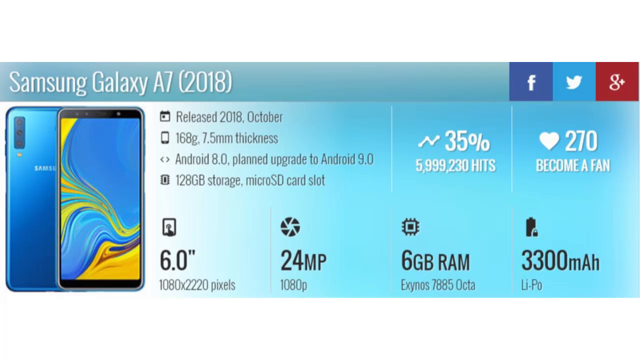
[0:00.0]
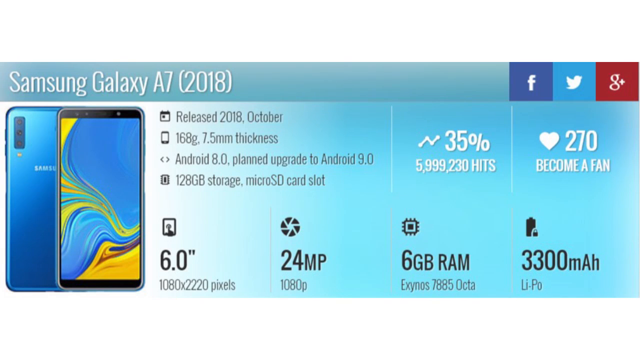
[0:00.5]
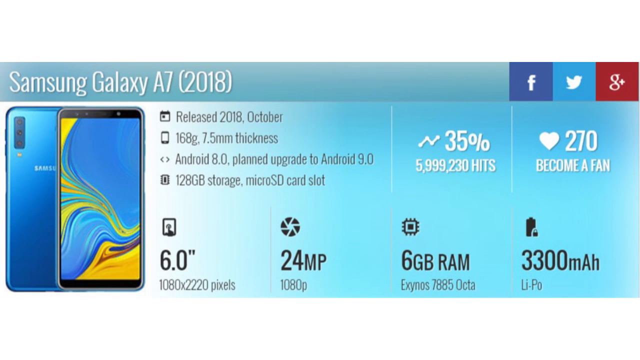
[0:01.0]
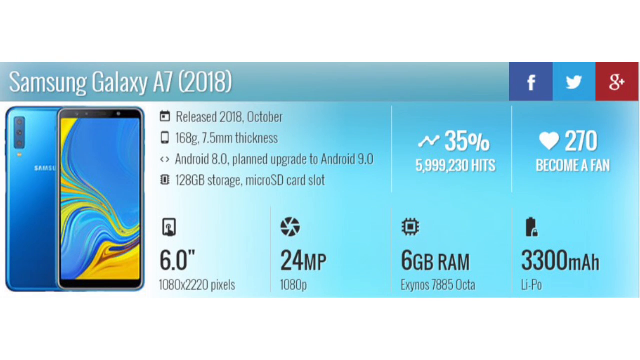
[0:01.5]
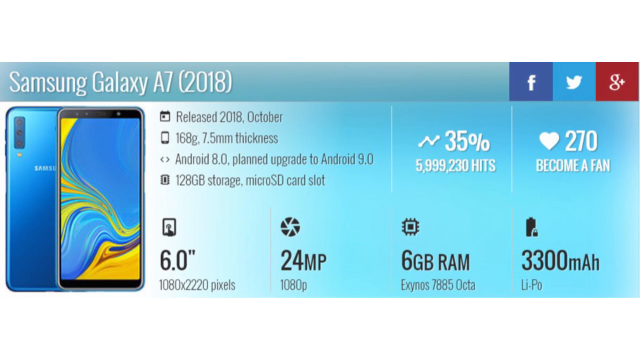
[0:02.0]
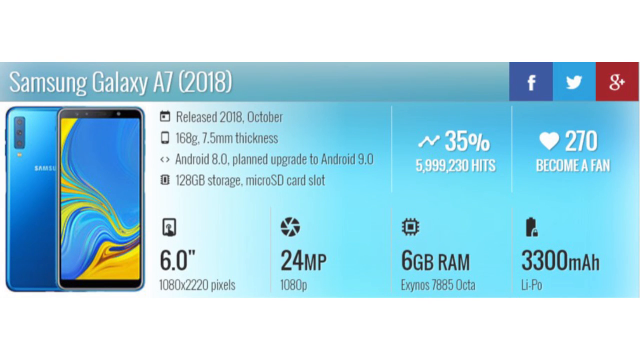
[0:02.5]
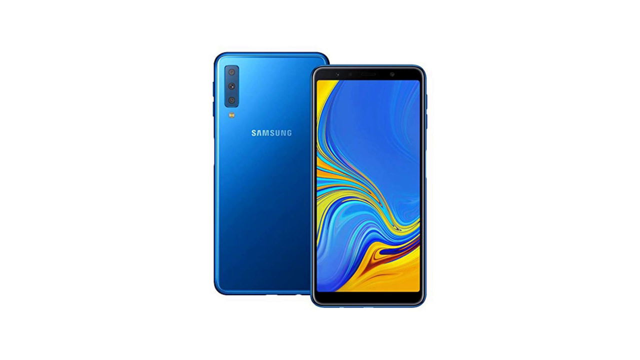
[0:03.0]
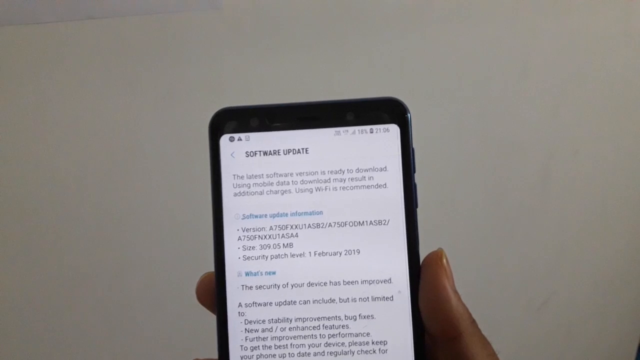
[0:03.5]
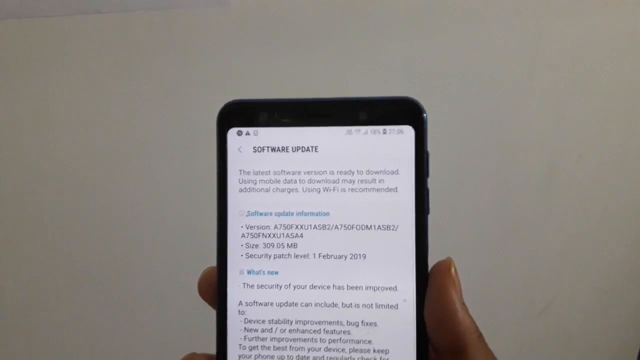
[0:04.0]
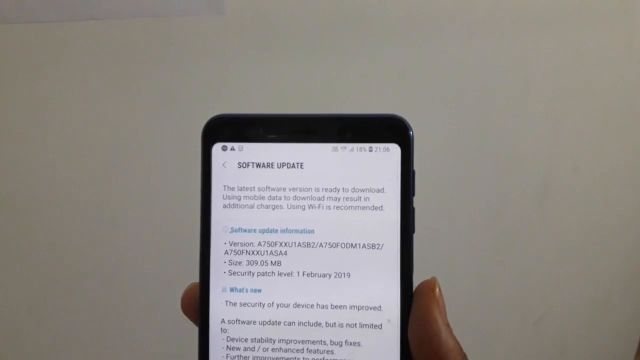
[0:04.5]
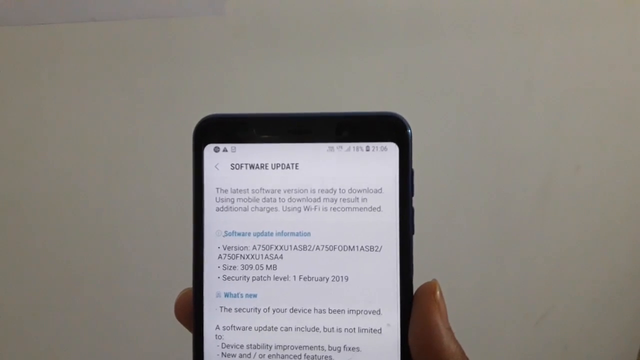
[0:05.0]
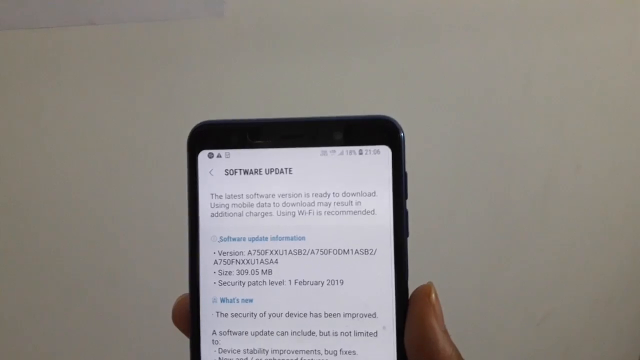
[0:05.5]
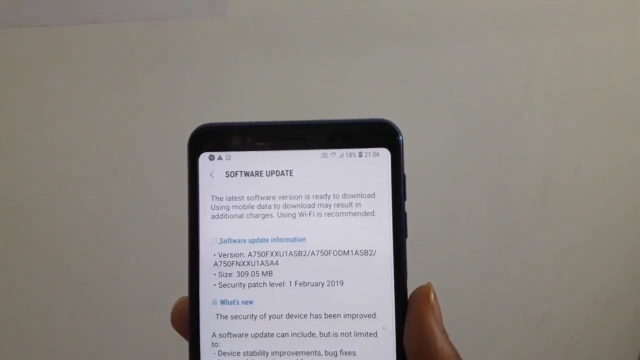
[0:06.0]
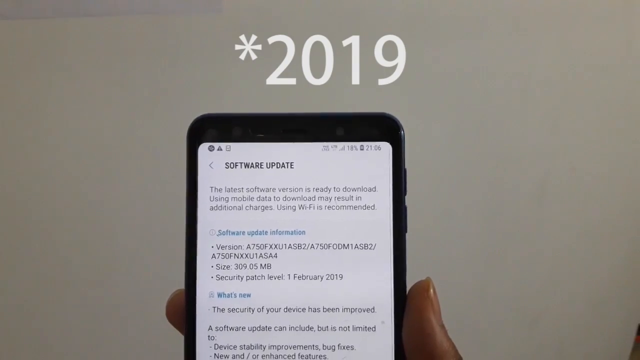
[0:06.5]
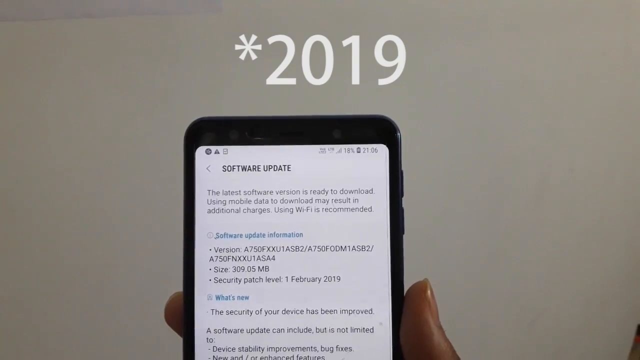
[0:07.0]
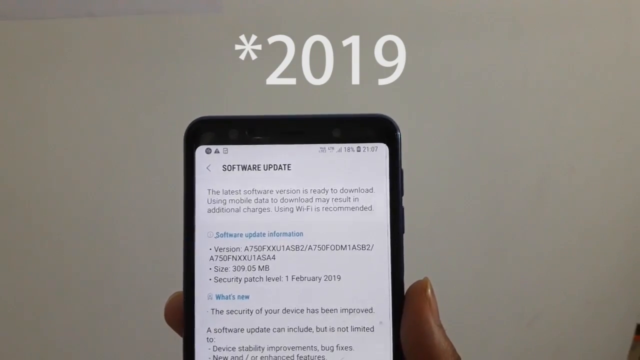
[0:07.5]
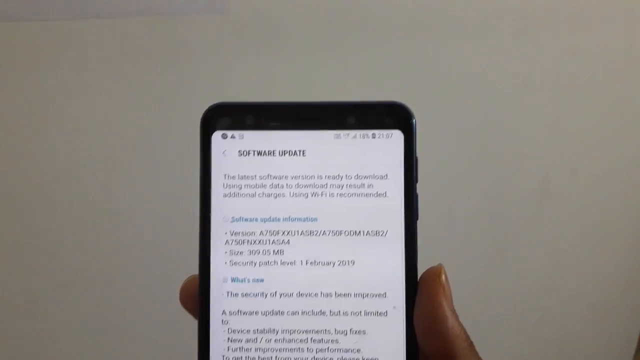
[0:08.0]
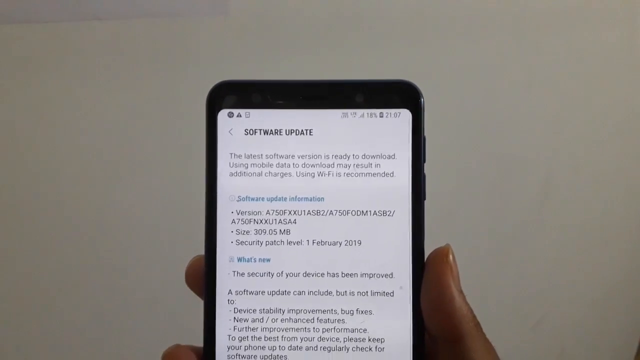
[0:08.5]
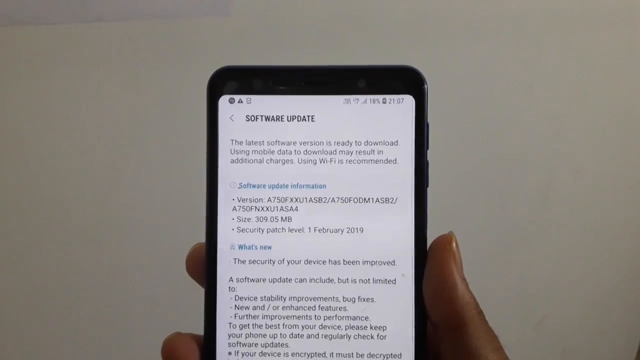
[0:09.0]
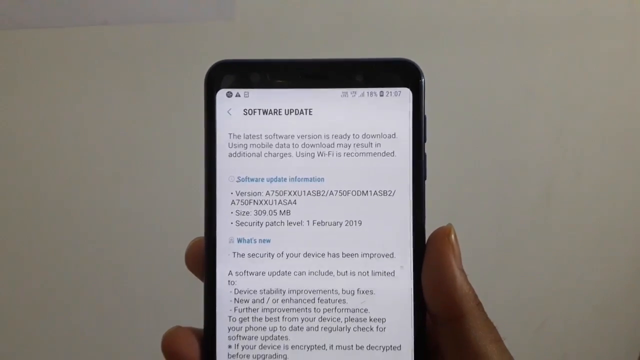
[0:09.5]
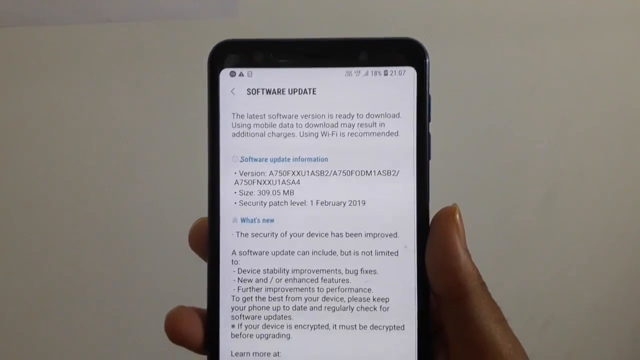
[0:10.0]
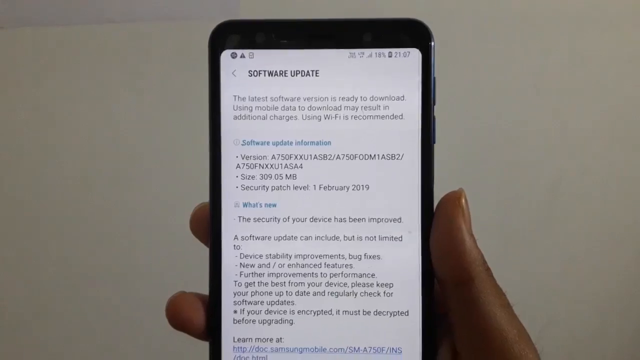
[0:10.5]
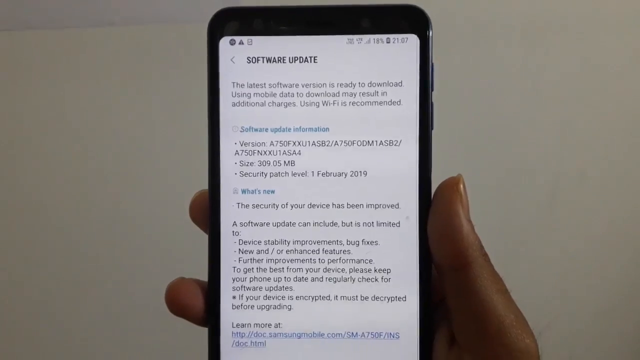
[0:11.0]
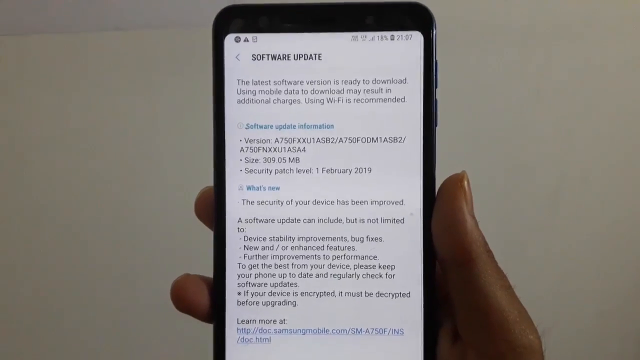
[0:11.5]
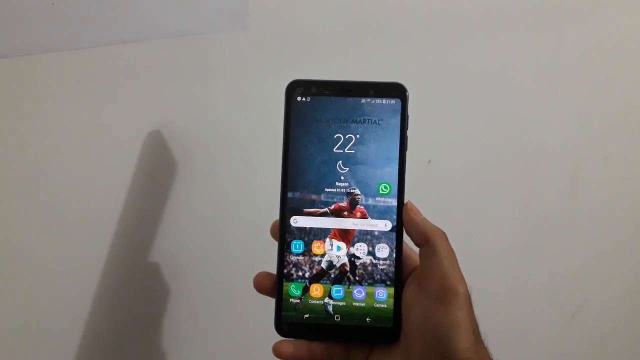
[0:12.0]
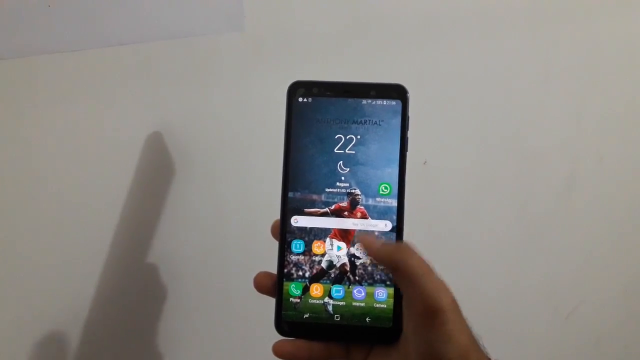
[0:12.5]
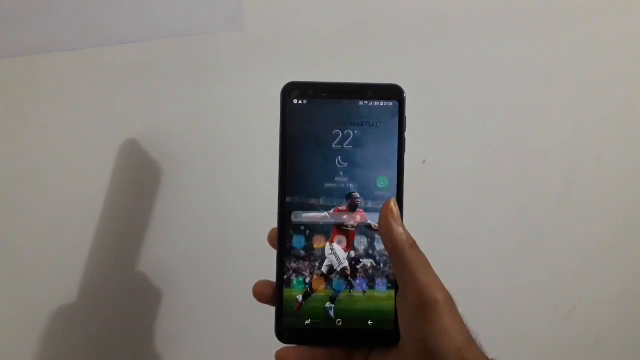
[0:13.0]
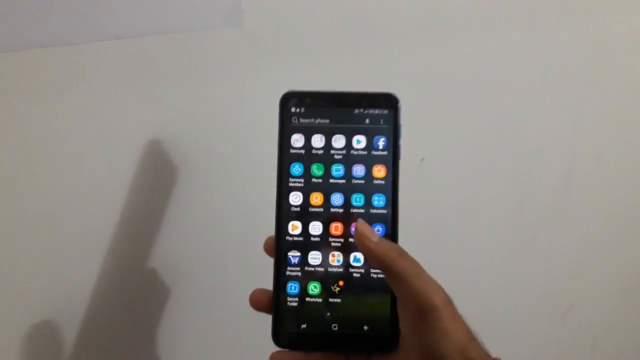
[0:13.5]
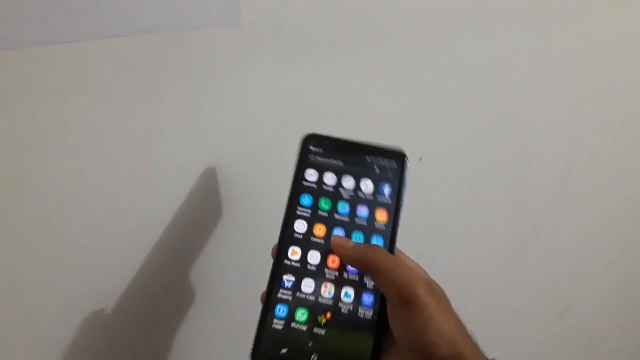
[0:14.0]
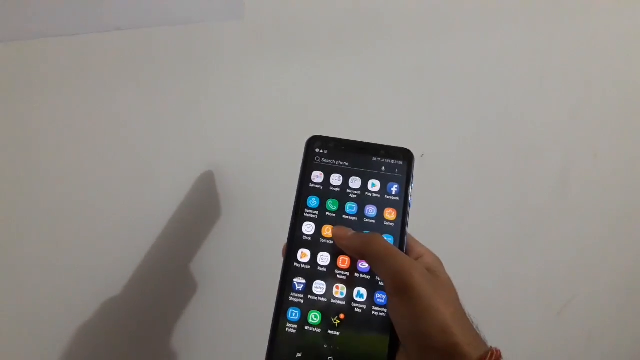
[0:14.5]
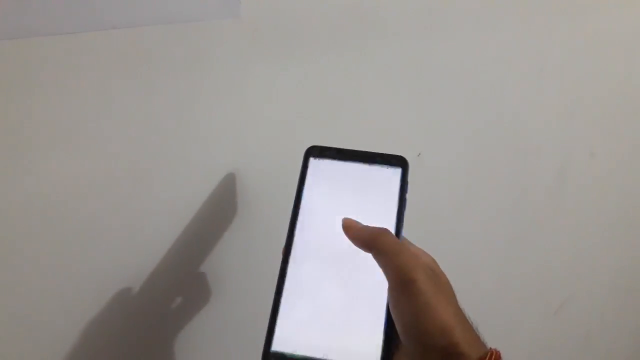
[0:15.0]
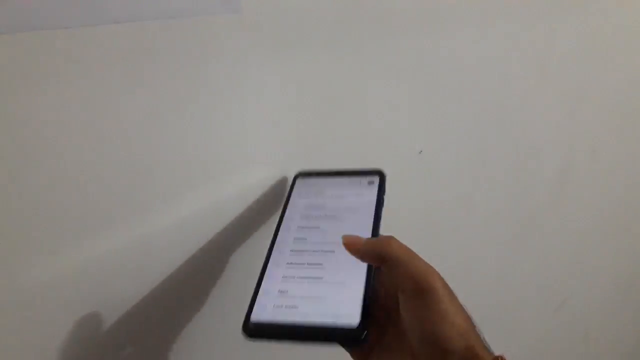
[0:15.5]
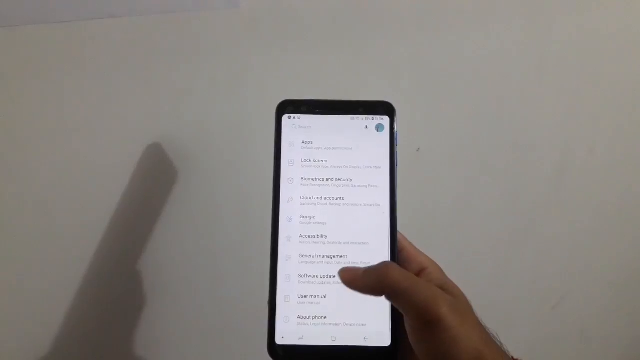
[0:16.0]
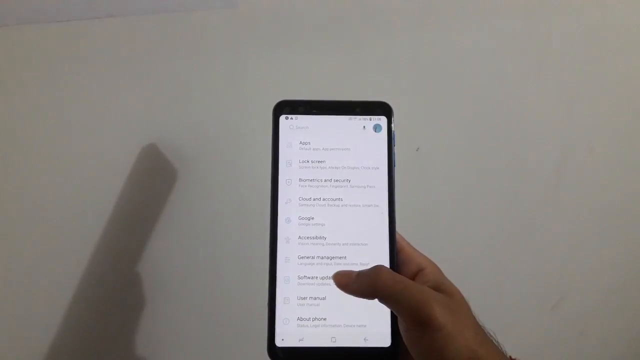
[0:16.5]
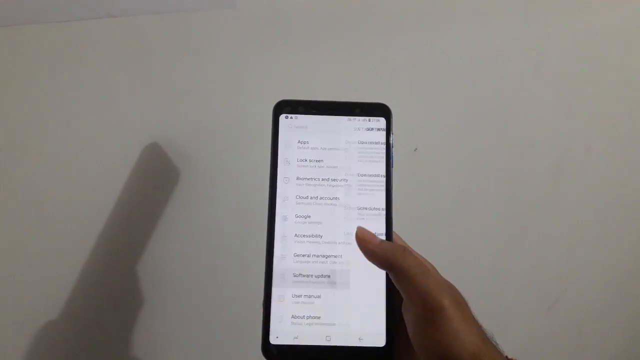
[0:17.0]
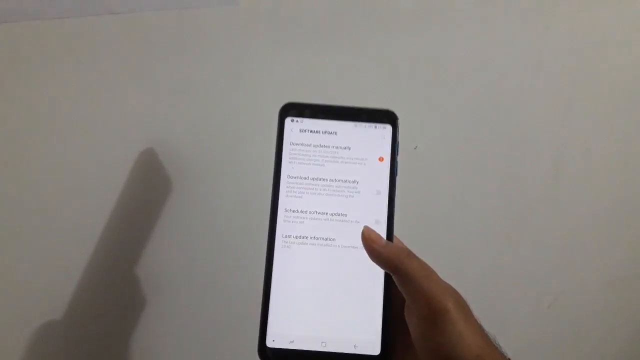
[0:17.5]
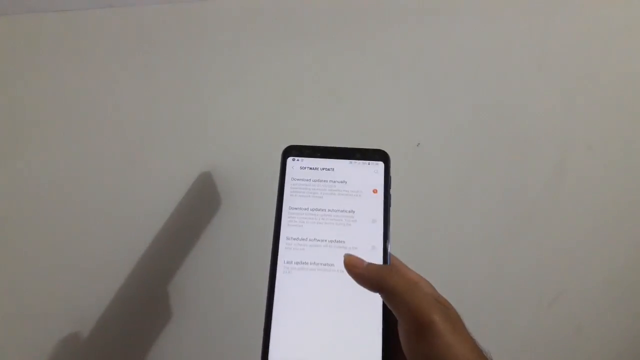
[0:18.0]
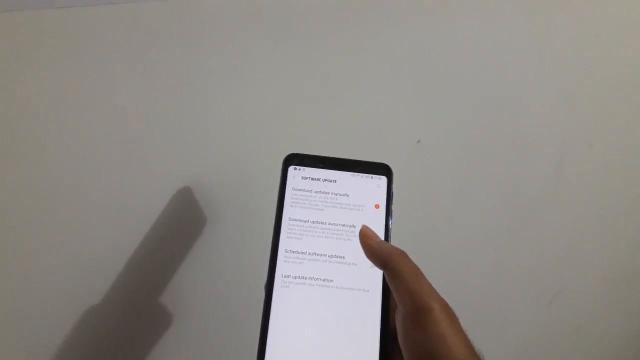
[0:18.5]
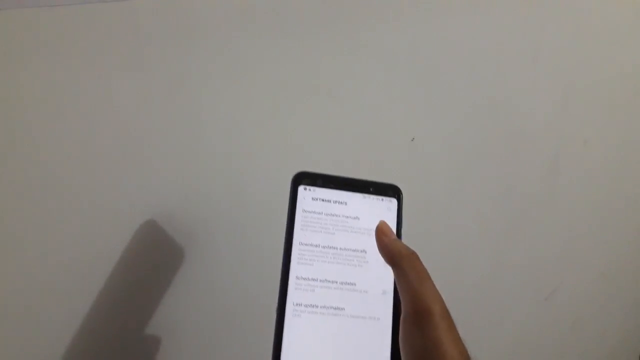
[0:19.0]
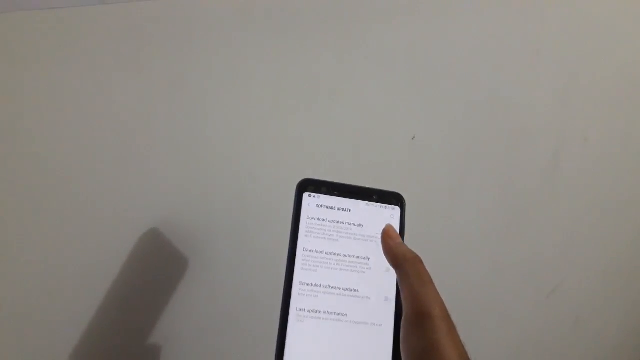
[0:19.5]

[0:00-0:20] The video opens by showing features of a Samsung Galaxy cellphone in a computer-generated print that lists the release date as well as the MPs and RAM. Then the actual Samsung Galaxy appears in person, with "2019" on top of the page. The phone screen says "software update," and a woman, recognizable by her hand, holds the phone in her right hand, demonstrating how it works and hitting the selections with her right thumb. A shadow is visible on the wall behind the phone. When she first holds up the phone, her index finger and another finger are visible; next she holds it with just her palm and right thumb. She scrolls down the page with her right thumb and occasionally clicks on areas.